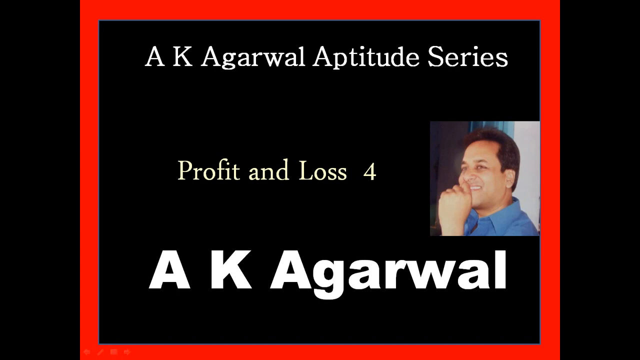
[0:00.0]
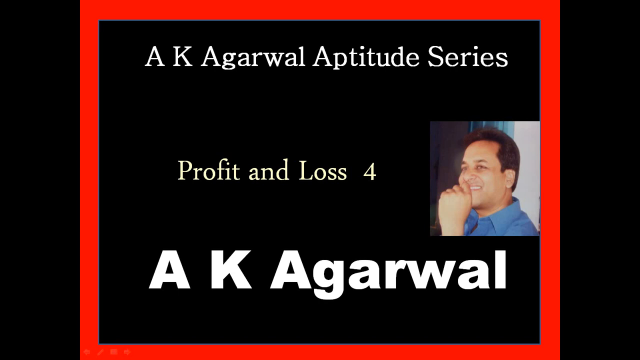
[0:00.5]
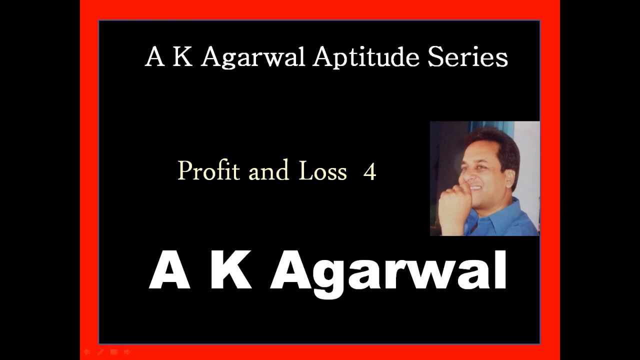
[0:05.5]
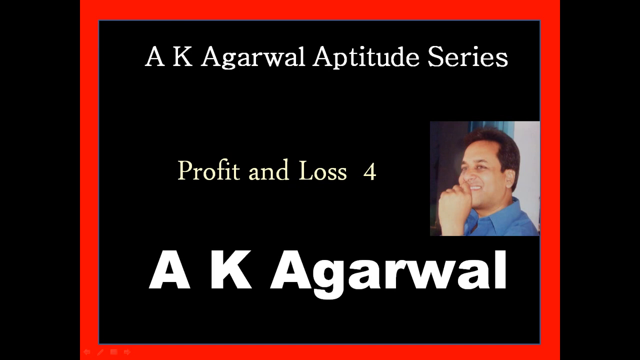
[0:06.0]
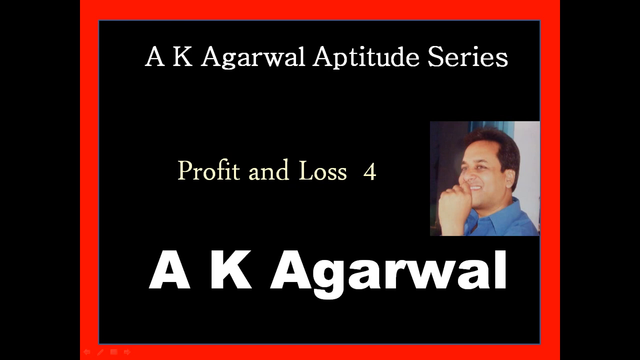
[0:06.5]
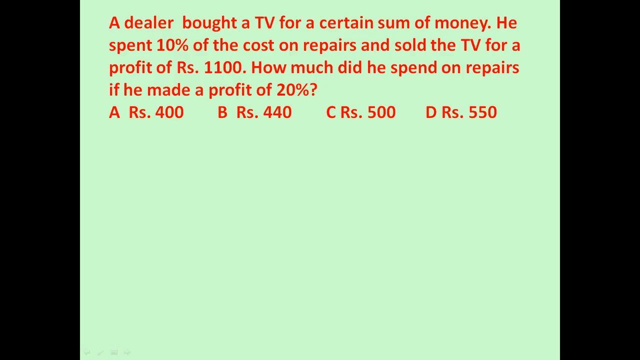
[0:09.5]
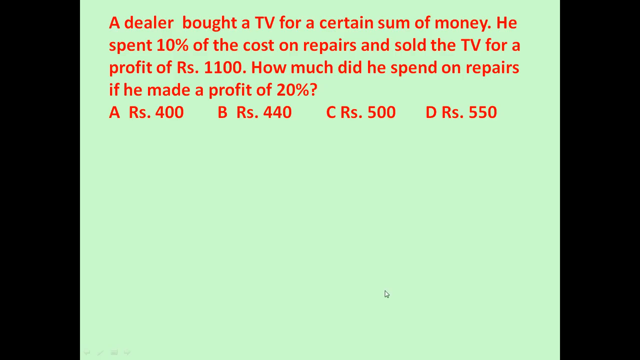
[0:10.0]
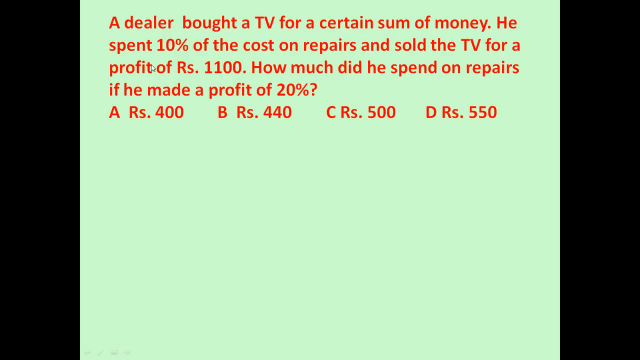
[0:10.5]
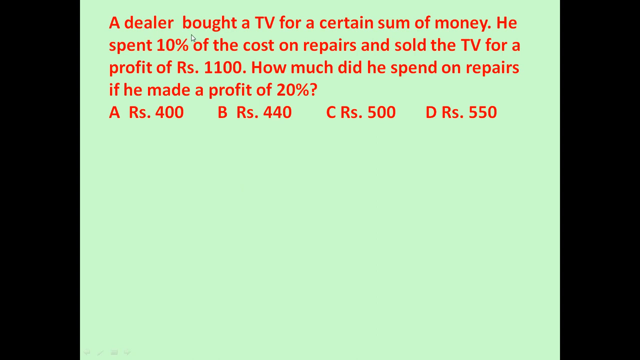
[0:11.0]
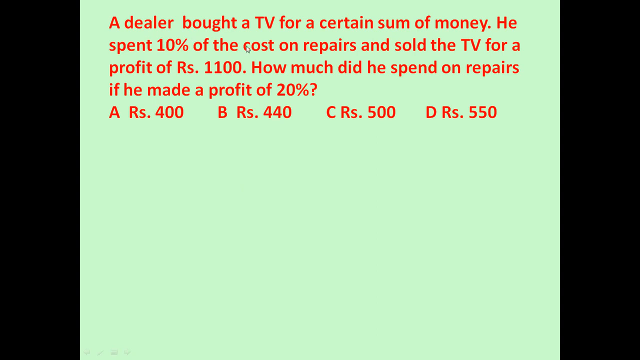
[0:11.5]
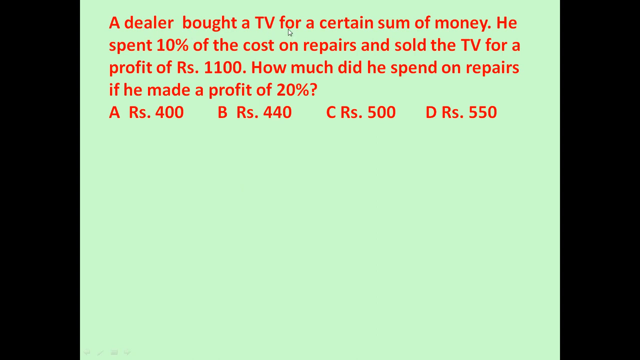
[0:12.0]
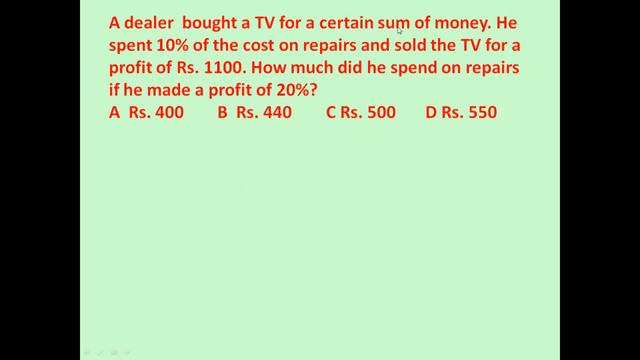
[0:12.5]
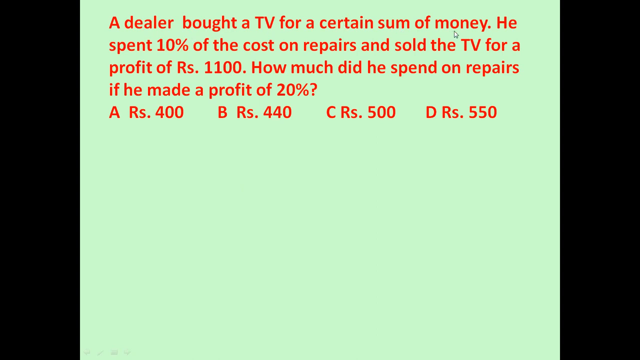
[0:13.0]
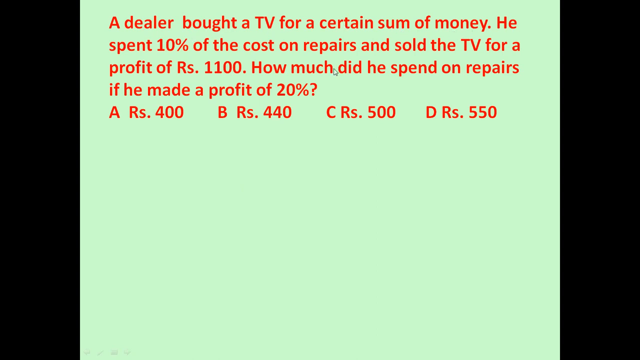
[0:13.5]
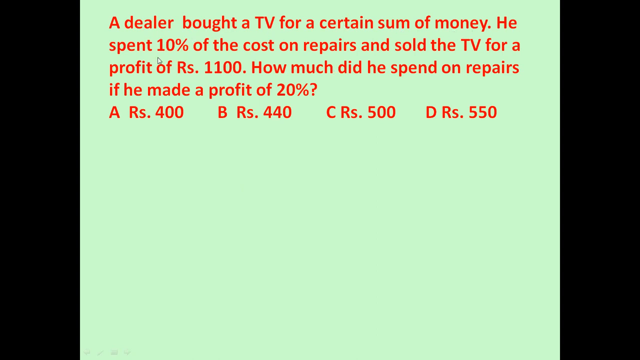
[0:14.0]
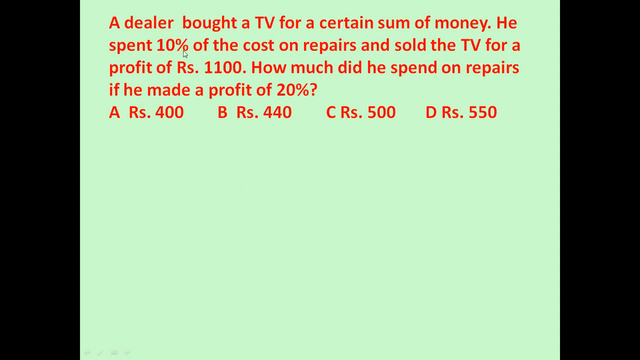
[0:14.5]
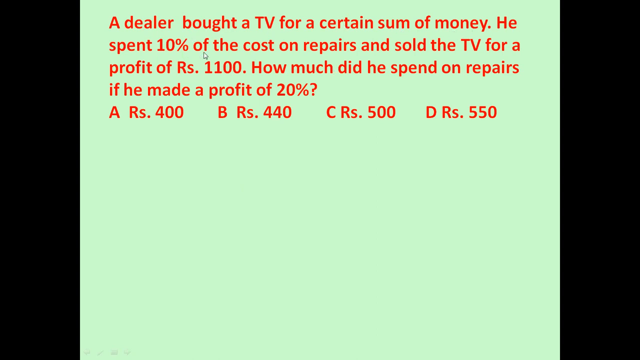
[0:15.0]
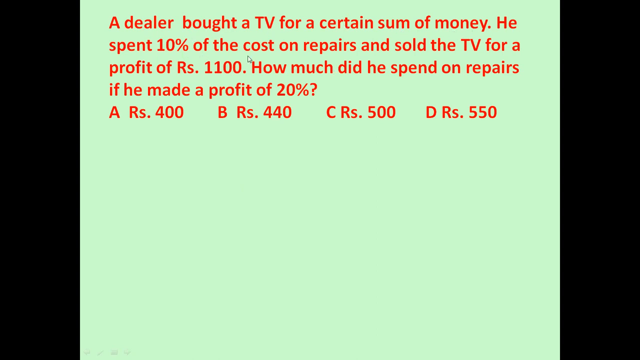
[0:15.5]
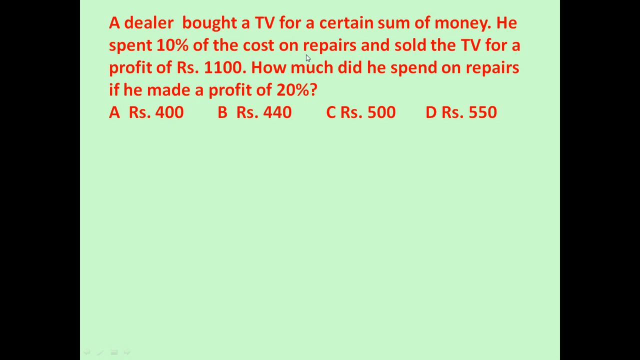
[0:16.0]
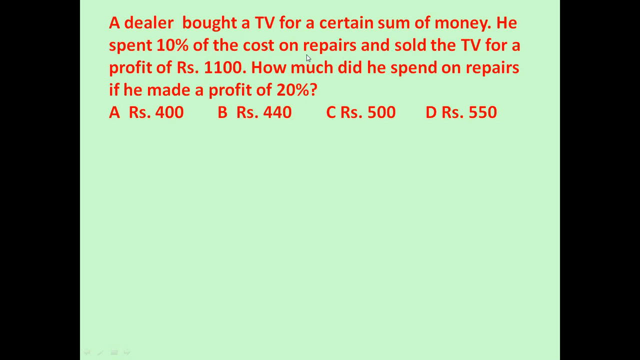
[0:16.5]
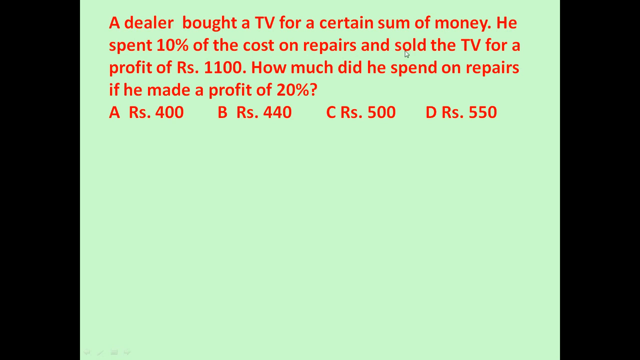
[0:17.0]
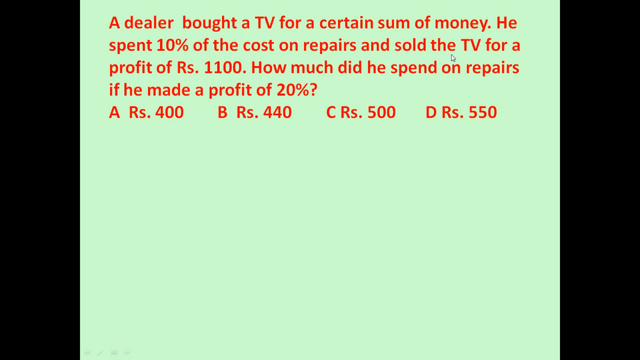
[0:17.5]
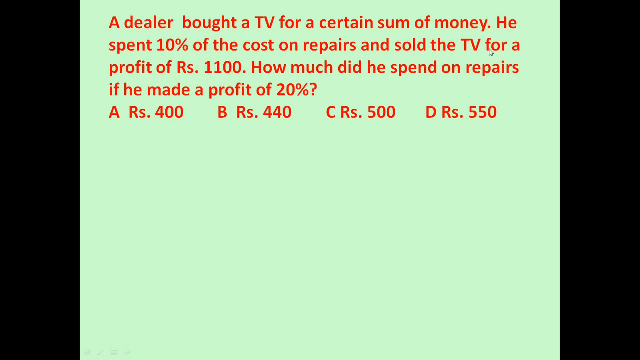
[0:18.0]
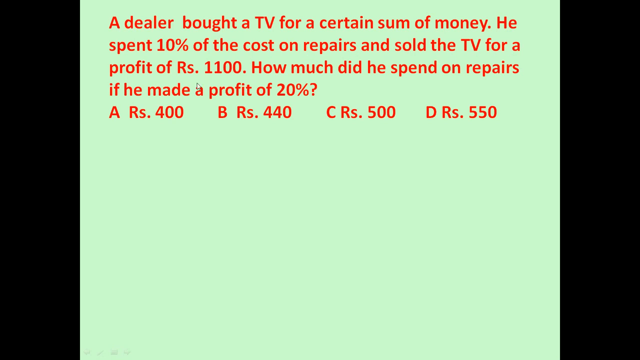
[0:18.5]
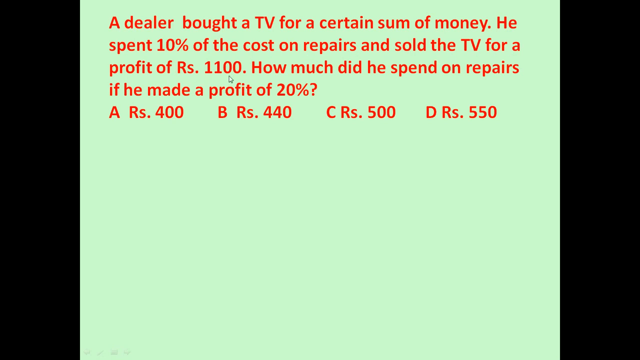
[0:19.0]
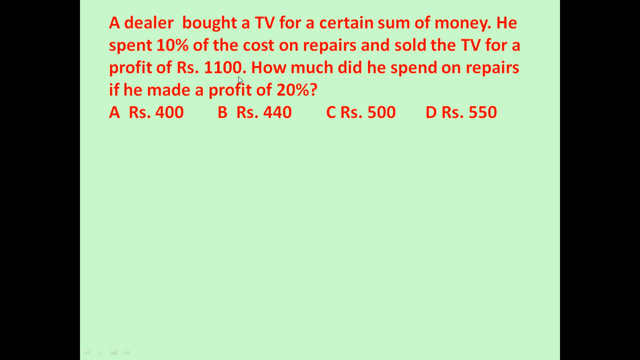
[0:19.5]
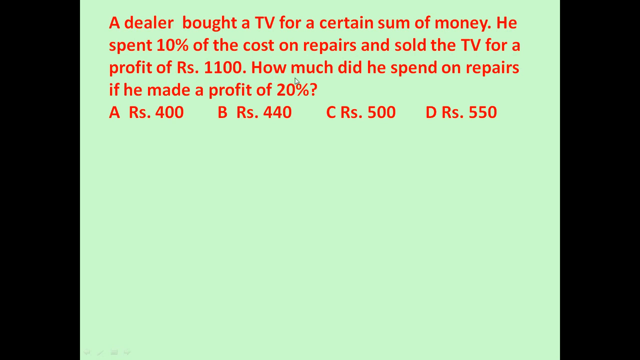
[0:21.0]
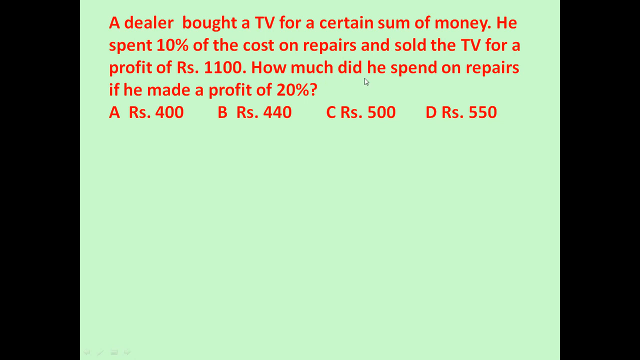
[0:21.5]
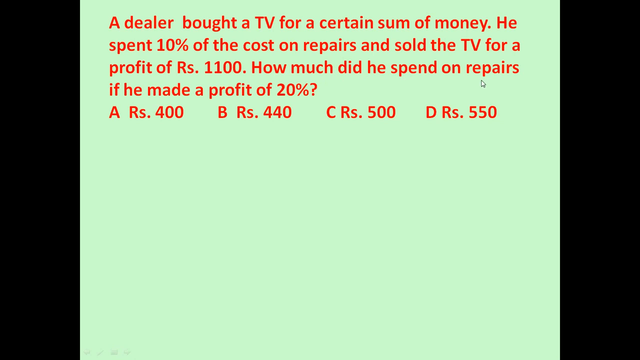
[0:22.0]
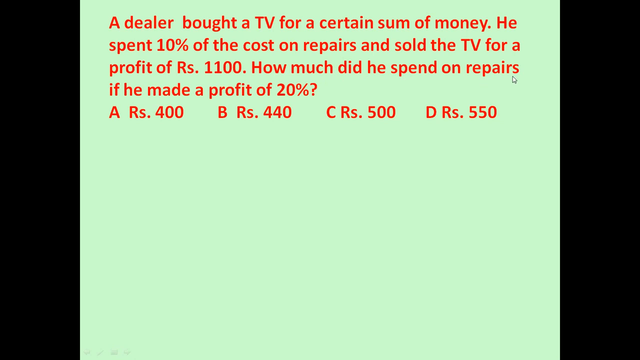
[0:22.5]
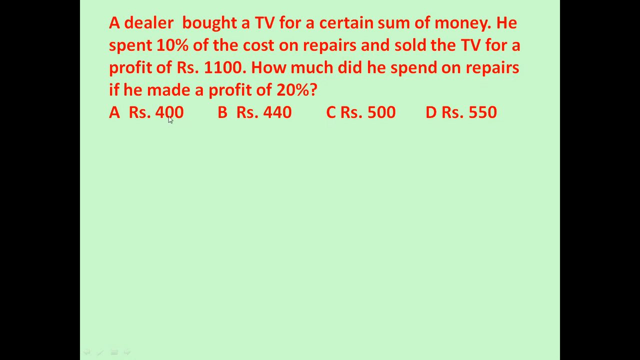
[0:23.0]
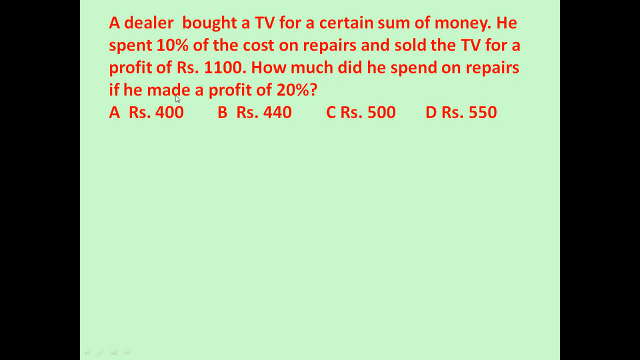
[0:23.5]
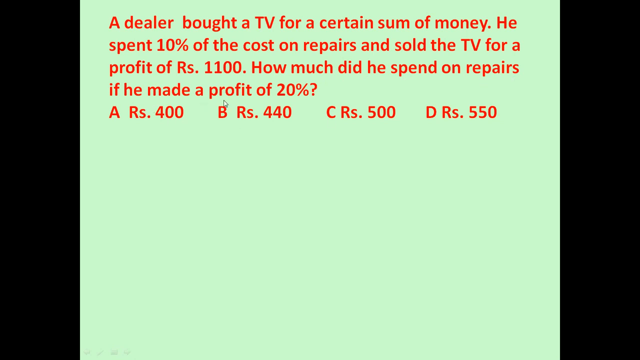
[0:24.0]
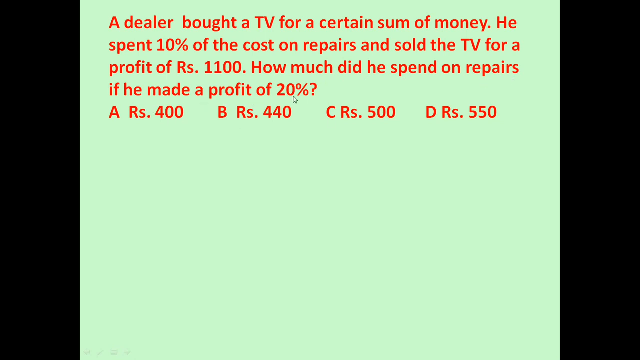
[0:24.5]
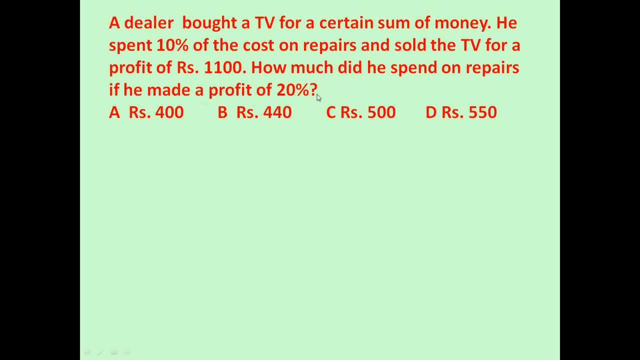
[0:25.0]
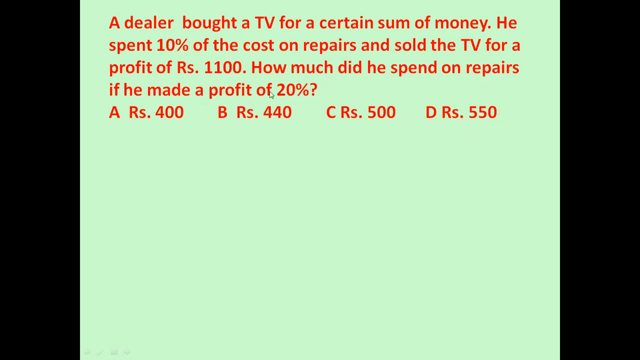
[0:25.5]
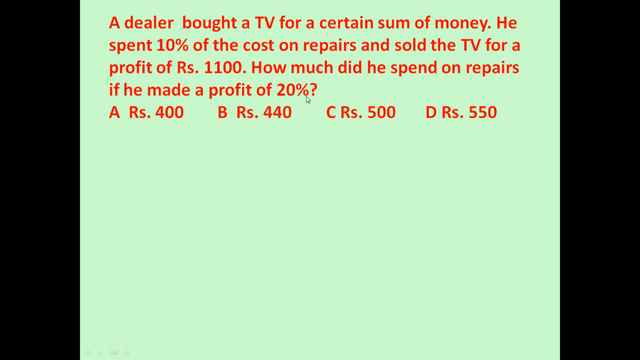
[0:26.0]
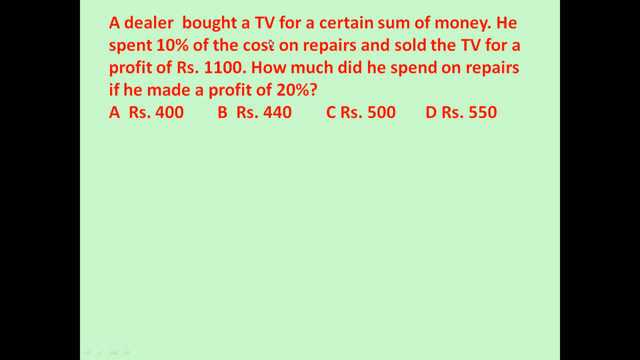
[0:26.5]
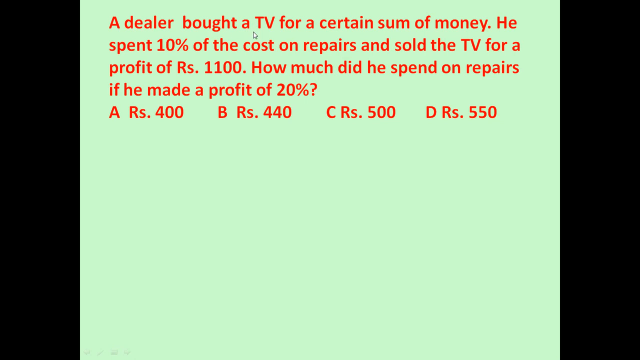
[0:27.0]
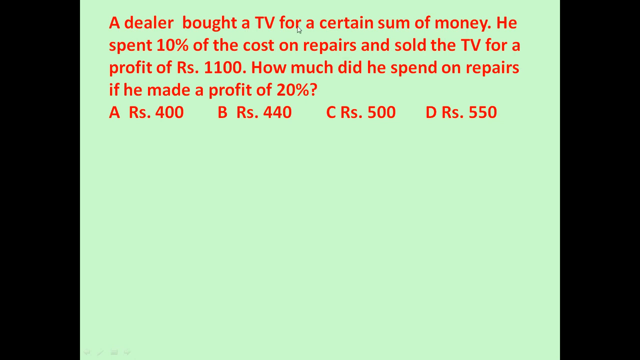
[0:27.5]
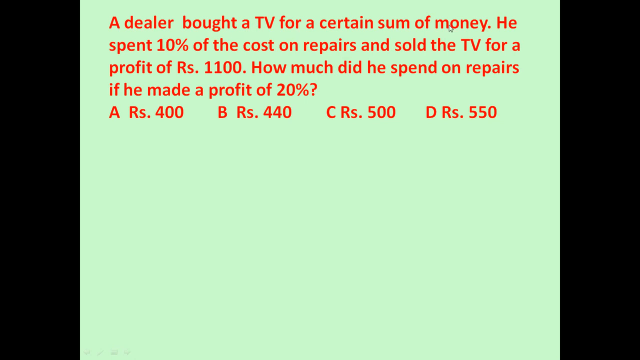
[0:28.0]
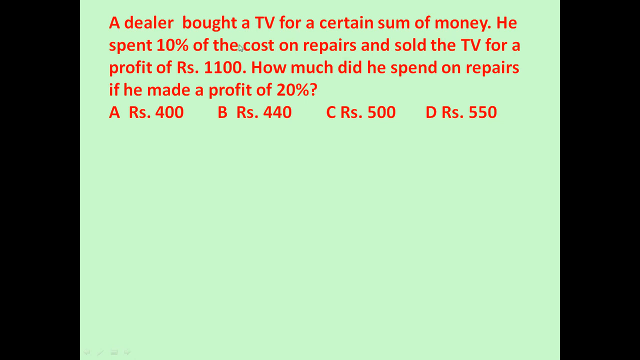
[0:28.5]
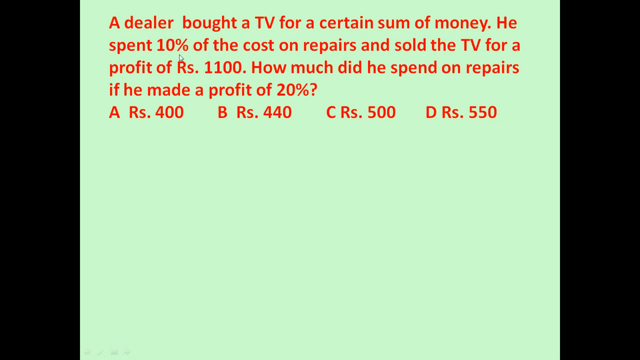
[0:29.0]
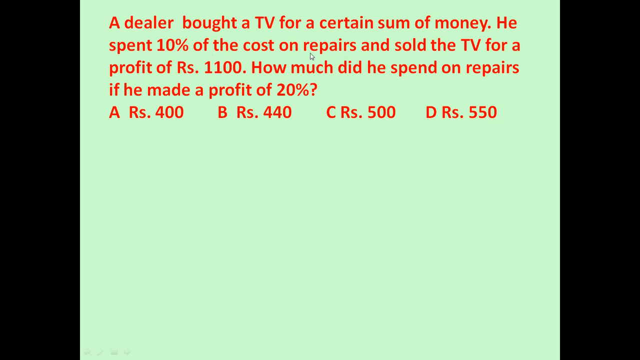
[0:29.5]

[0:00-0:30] What looks like a professor giving a lecture opens with a picture of an Indian man with short hair and a blue shirt, his hand on his chin. The man's name is A.K. Agarwal, and this is the A.K. Agarwal Aptitude Series; the lecture is about Profit and Loss No. 4. Next, a sentence and options appear. The question reads: "A dealer bought a TV for a certain sum of money. He spent 10% of the cost on repairs and sold the TV for a profit of Rs.1100. How much did he spend on repairs if he made a profit of 20%?" An arrow cursor points to the sentence as it is read, apparently controlled by the professor with a mouse. The options are: A, Rs. 400; B, Rs. 440; C, Rs. 500; D, Rs. 550. It looks like a math problem to be solved.